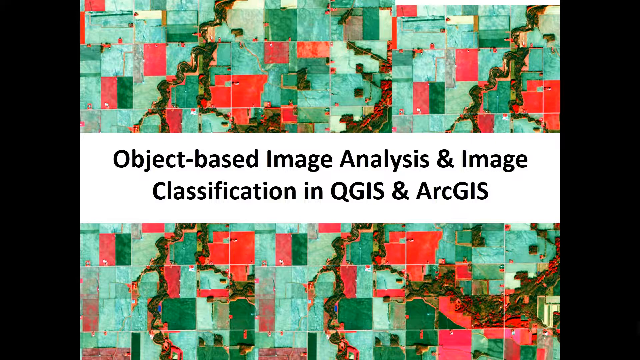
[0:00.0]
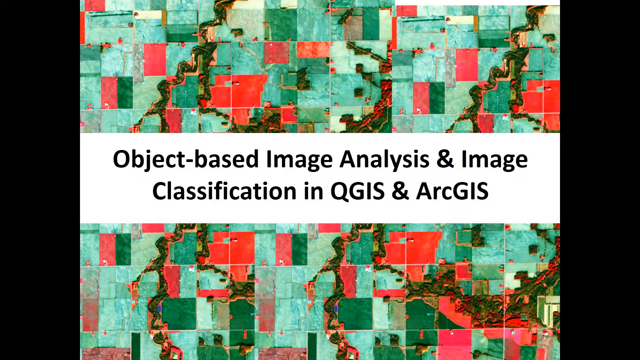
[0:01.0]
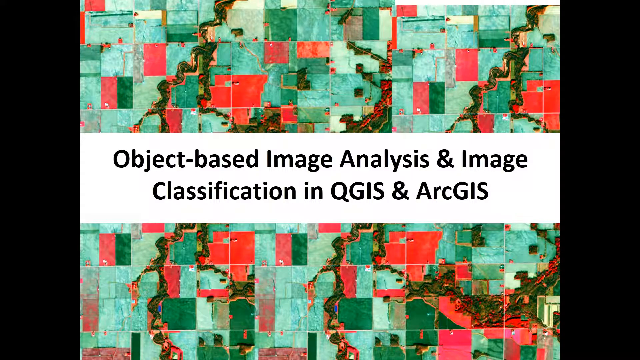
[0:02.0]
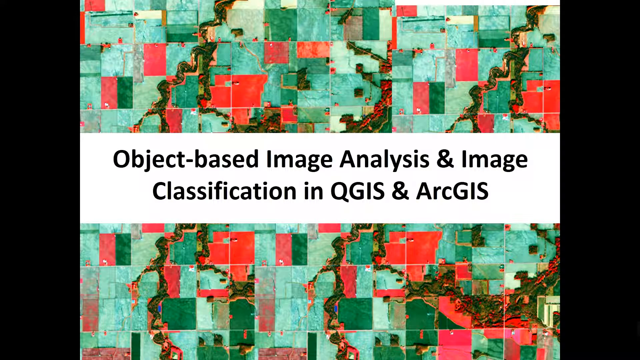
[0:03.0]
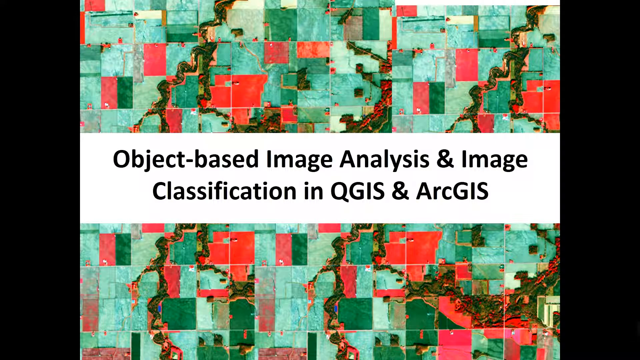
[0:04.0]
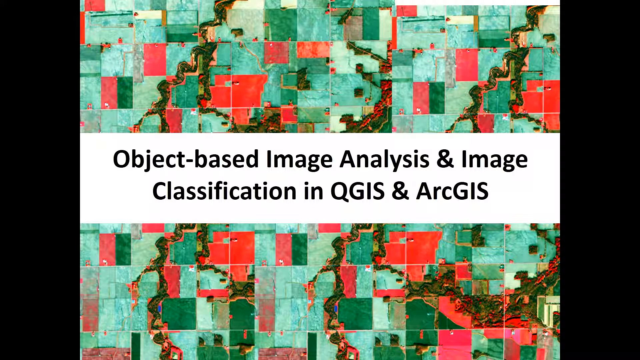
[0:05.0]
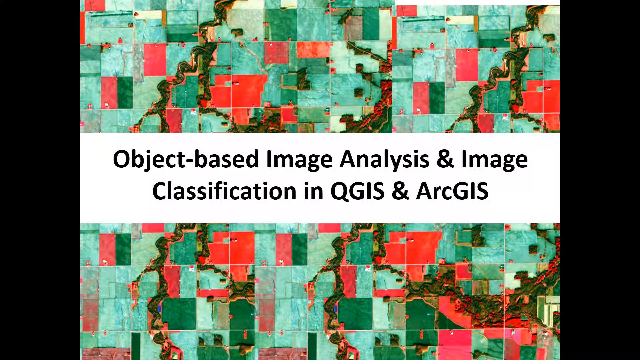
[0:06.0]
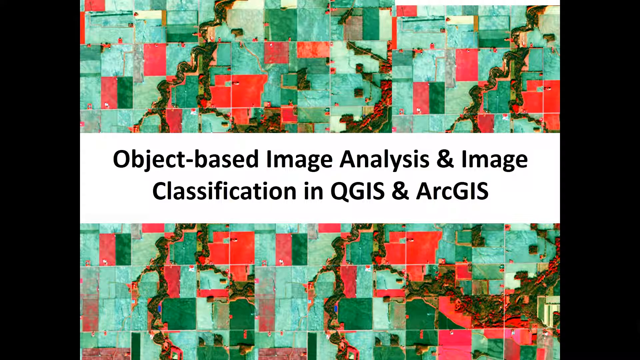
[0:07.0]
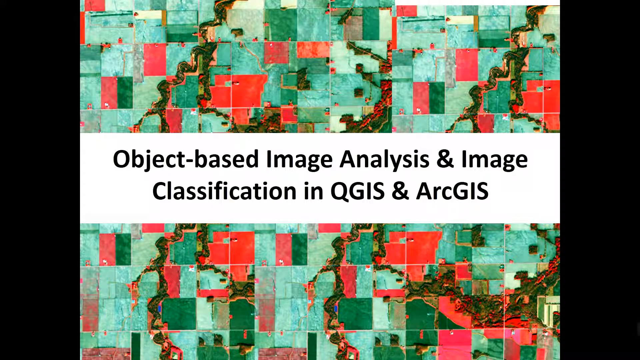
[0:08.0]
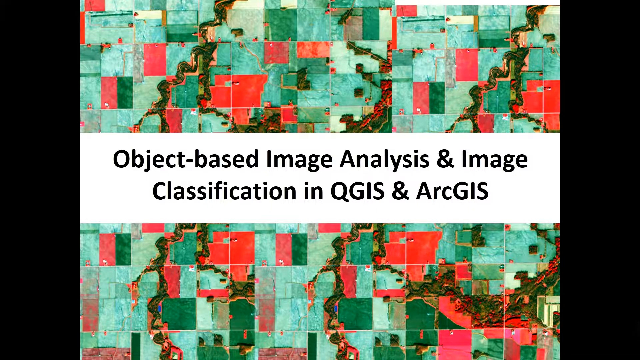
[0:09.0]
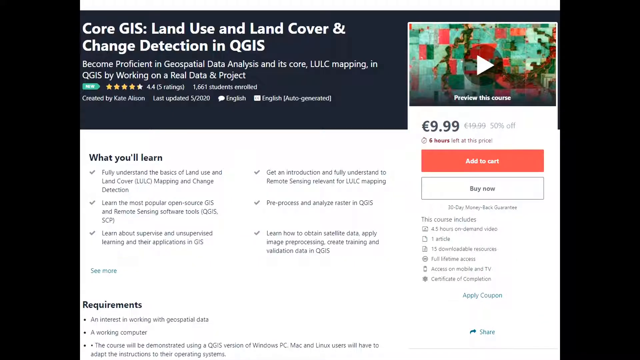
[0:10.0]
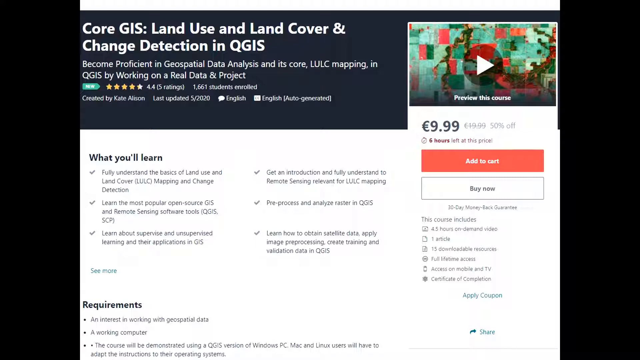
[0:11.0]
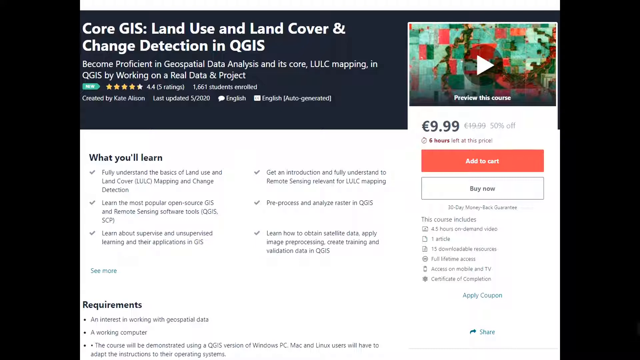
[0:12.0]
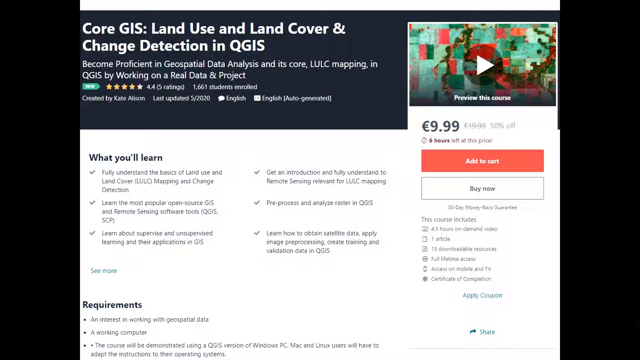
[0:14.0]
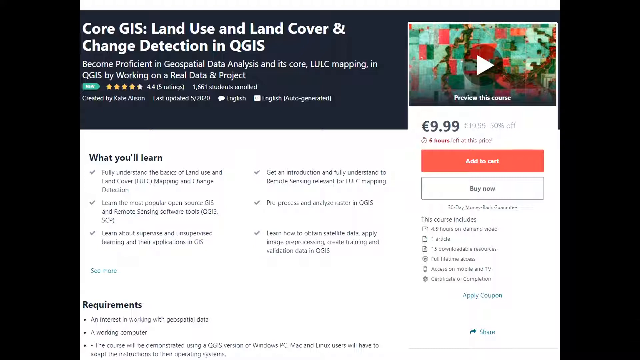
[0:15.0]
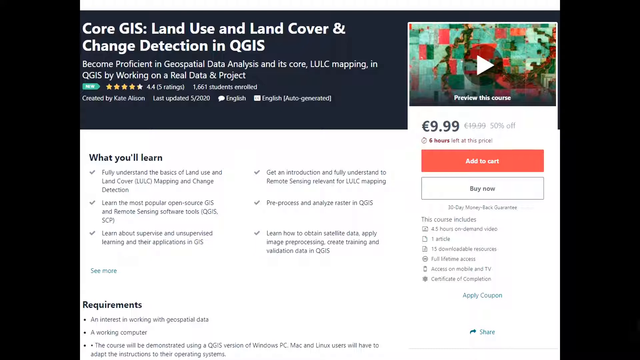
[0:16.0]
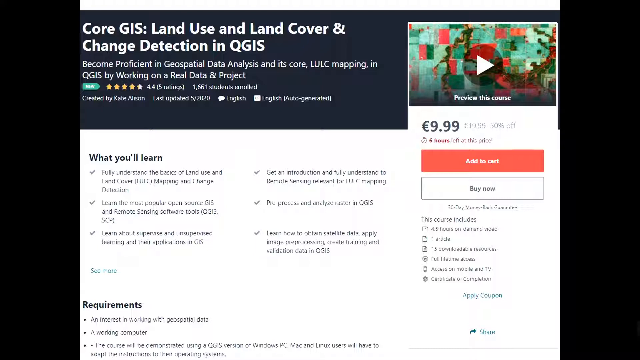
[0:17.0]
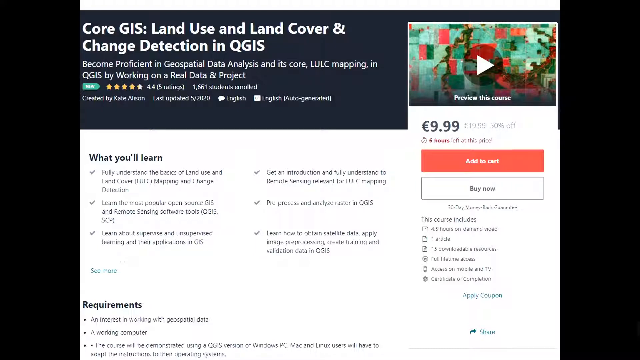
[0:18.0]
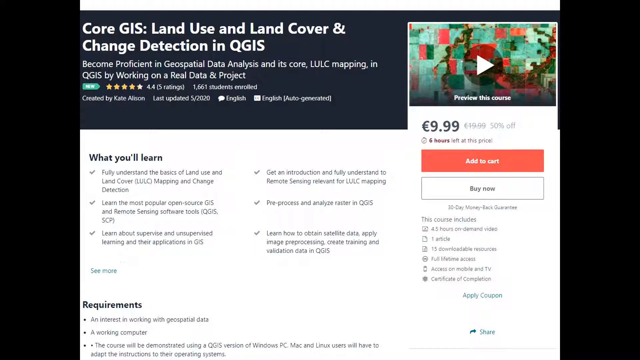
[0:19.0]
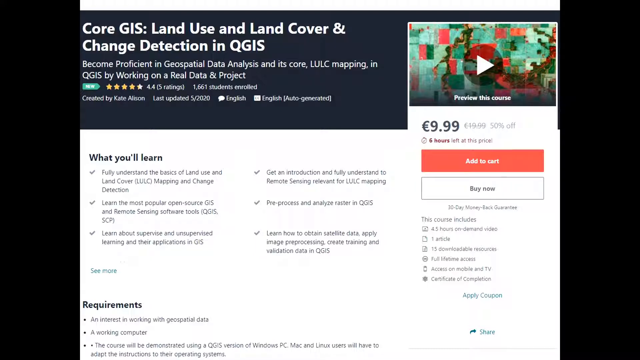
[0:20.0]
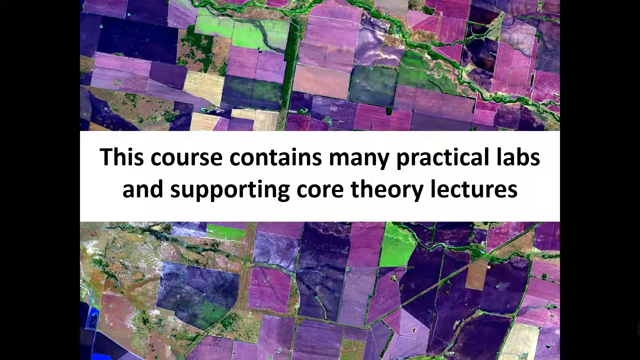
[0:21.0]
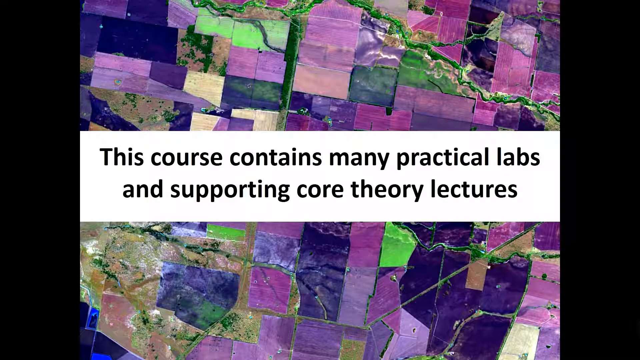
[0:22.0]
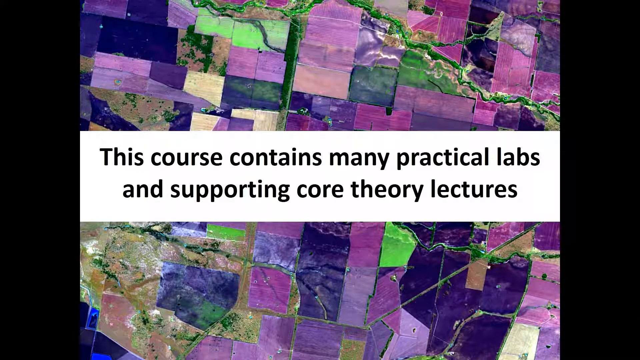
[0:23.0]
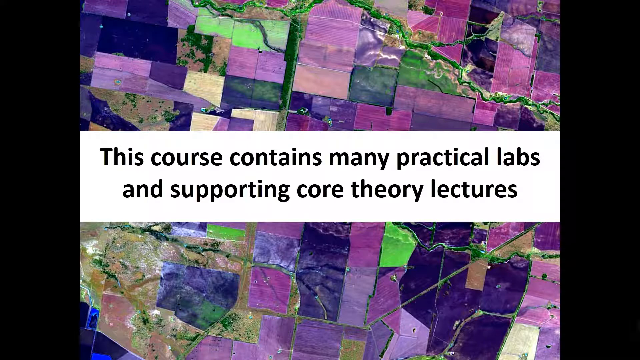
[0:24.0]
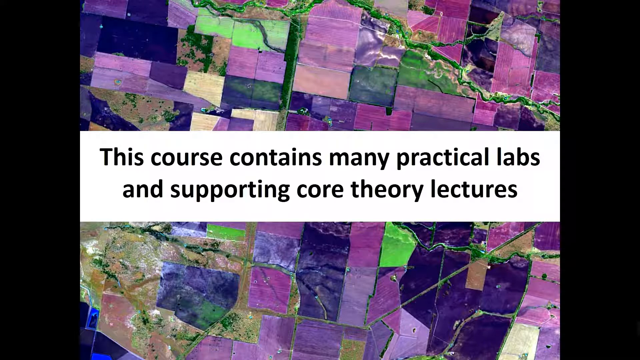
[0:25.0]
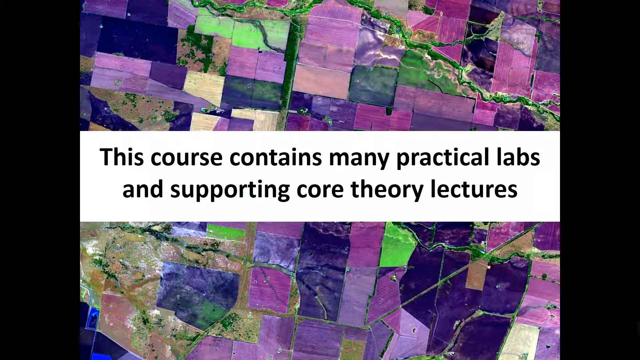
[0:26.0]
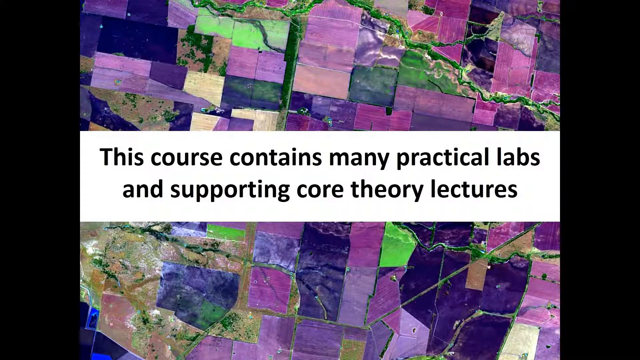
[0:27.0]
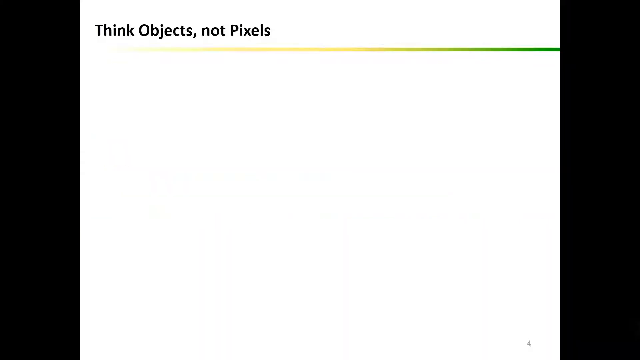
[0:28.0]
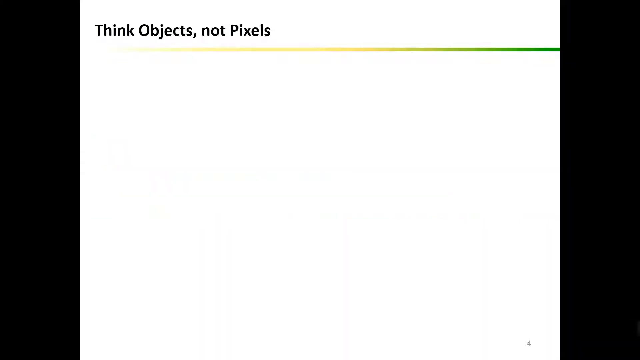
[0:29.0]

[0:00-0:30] The video is about object-based image analysis and image classification in QGIS and ArcGIS, and appears to be some sort of software course. It concerns land use and land cover and change detection in QGIS, and shows a price of $9.99. The course is presented as containing many practical labs and supporting core theory lectures, along with the phrase think objects, not pixels. It apparently uses an aerial view of a landmass in which different areas have different colors, each color corresponding to some meaning, like a key or legend. The course lists what will be learned, apparently working on real data and projects, practical labs, and supporting core theory lectures.